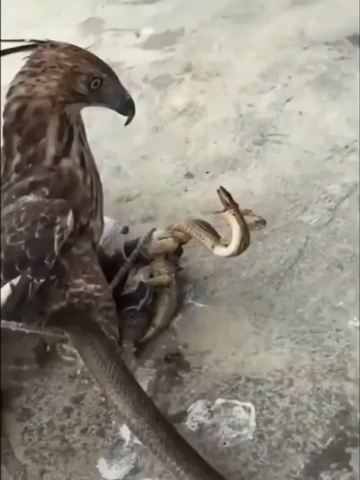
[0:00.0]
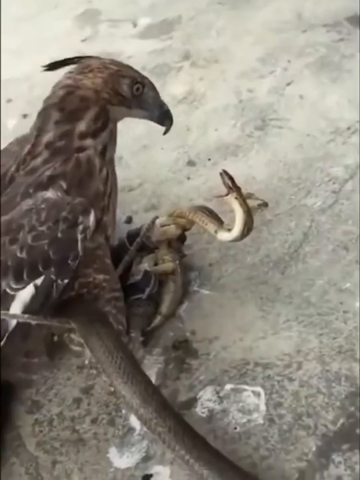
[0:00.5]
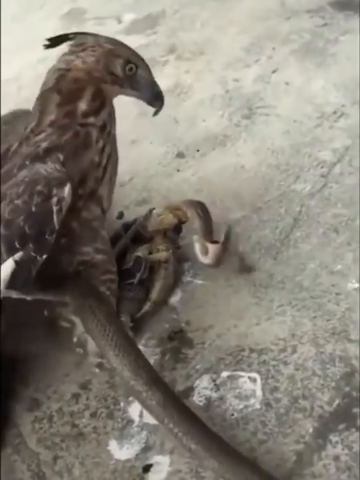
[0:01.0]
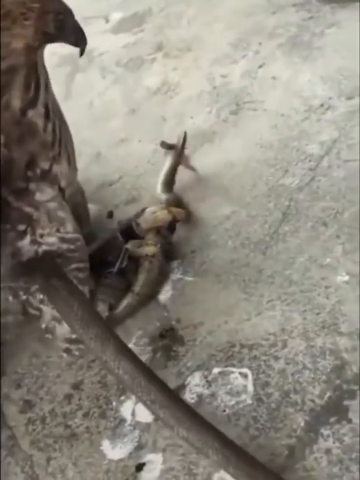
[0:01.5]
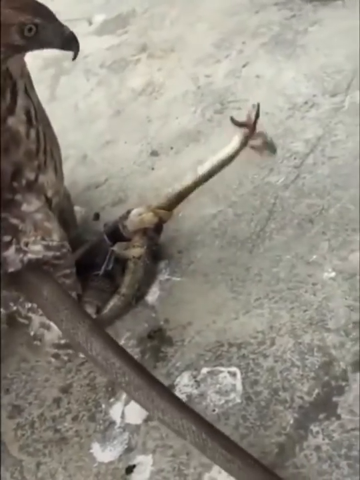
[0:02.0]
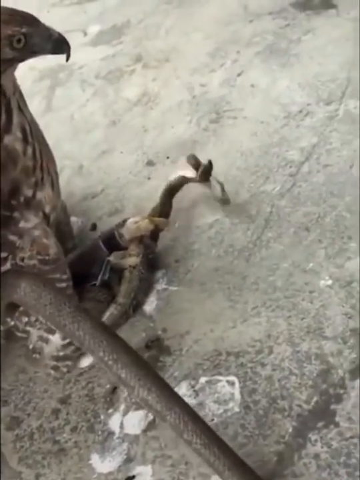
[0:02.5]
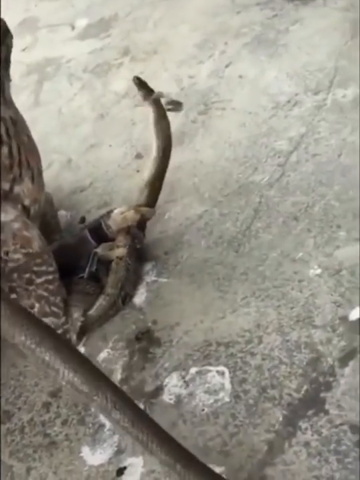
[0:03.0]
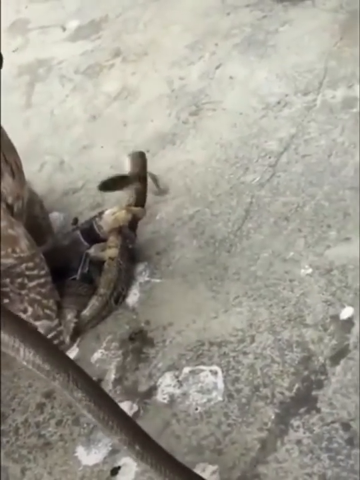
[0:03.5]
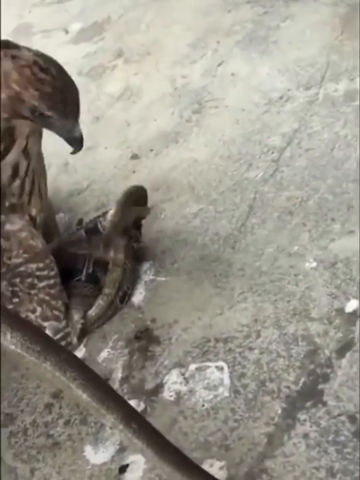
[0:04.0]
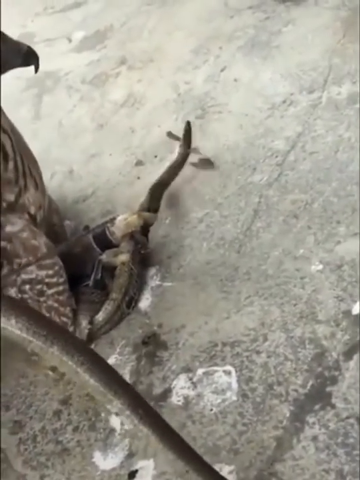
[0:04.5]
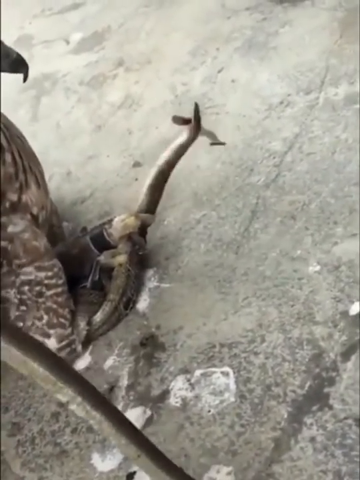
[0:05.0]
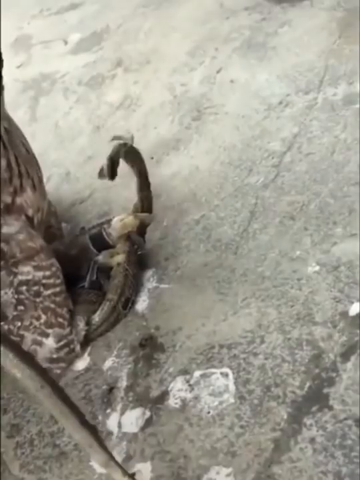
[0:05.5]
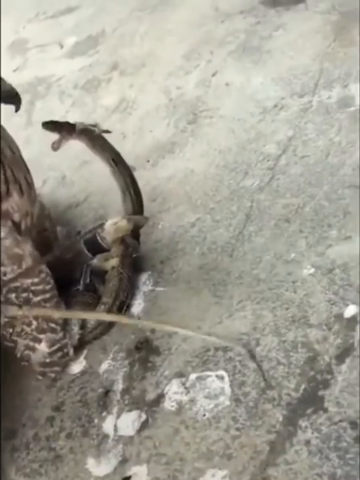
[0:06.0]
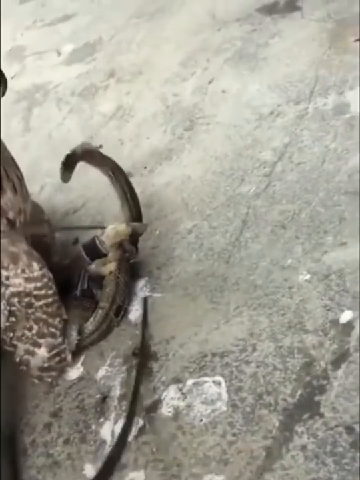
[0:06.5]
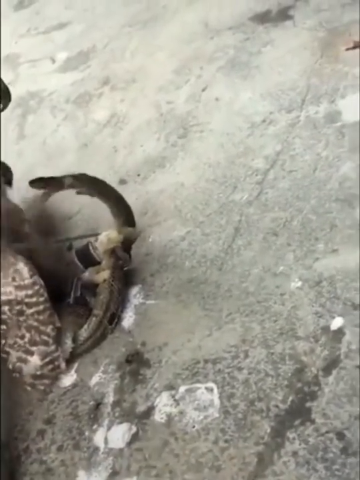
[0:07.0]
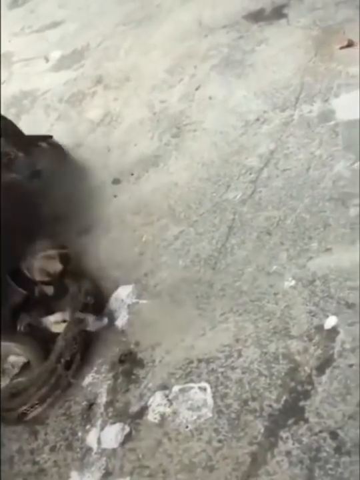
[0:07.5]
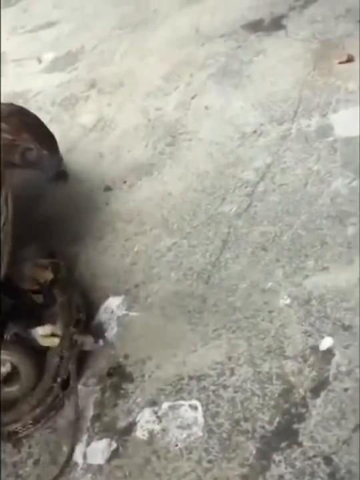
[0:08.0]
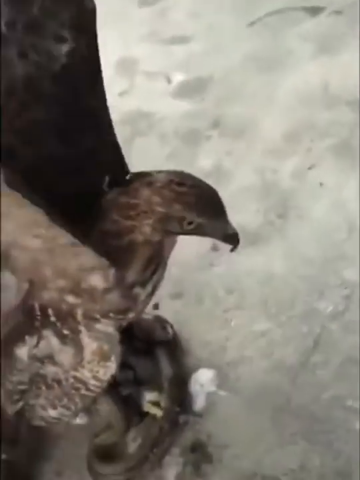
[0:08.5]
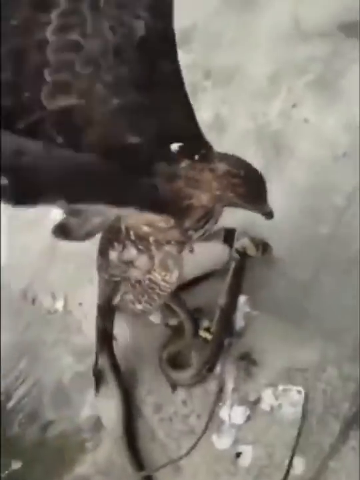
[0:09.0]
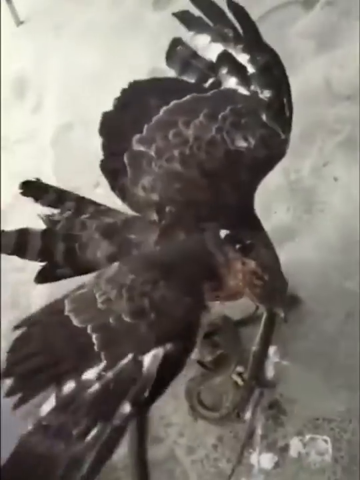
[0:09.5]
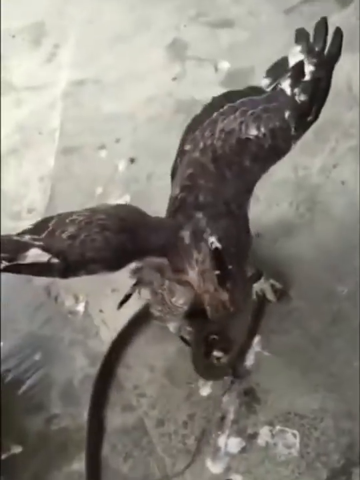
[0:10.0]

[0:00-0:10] A snake and an eagle are face-to-face. The snake's mouth looks like it is open, and the snake appears to be angry, as if it is going to try to attack the eagle. The eagle, seen from a side view, is brown; it is turned to the right and looking directly in front of it. The setting is outdoors, and the ground appears to be concrete. The eagle points its beak down and appears to hit the snake right inside its mouth, seemingly angering the snake, which starts moving its head all over the place in many different directions. The snake then tries to tangle up the eagle, and the eagle flaps its wings a few times. The snake appears trapped by the eagle, whose claws are clearly holding it down. The eagle flaps its wings as the video ends.